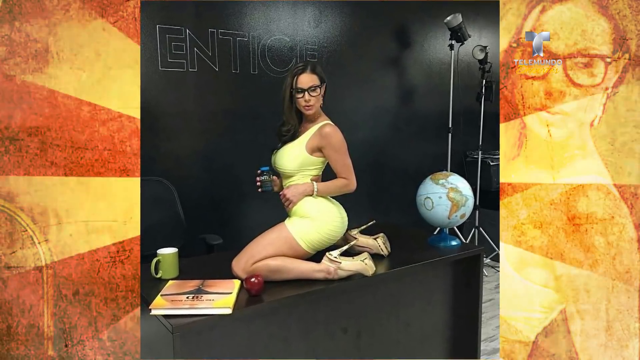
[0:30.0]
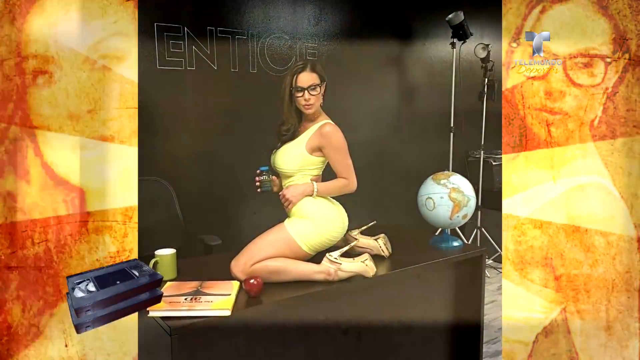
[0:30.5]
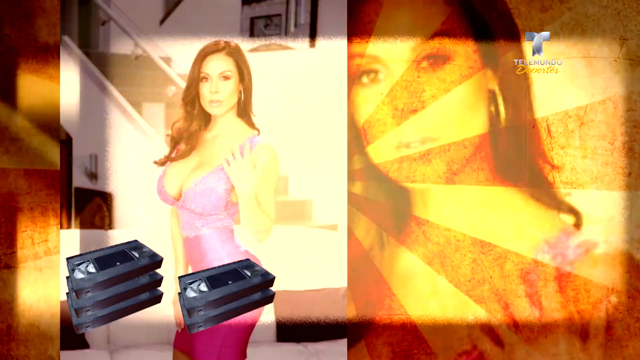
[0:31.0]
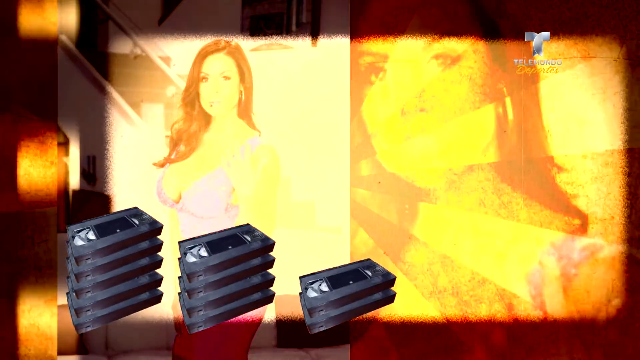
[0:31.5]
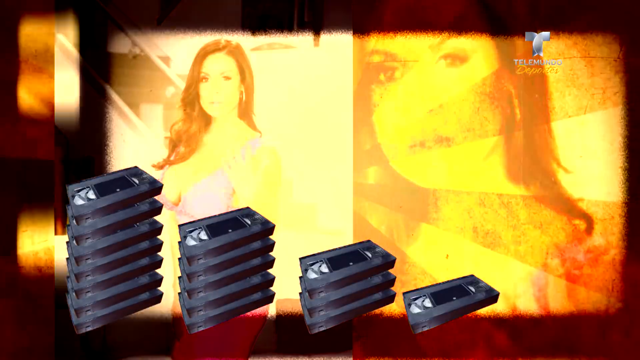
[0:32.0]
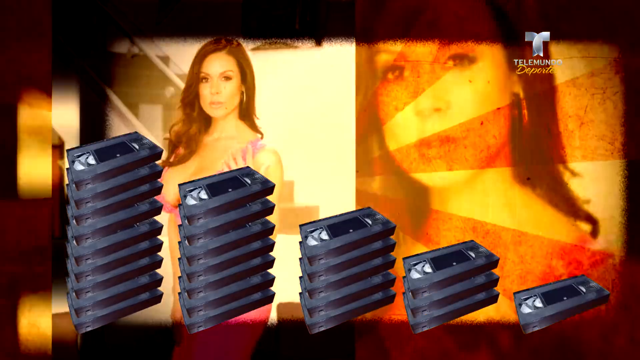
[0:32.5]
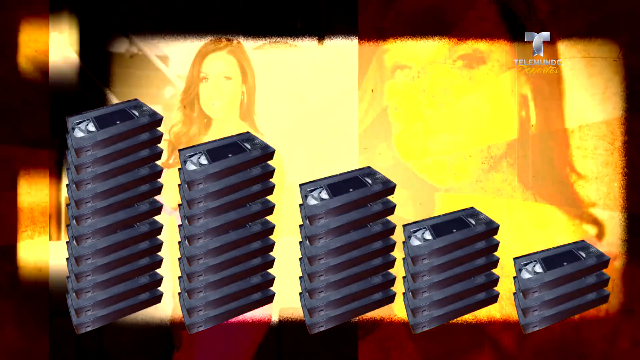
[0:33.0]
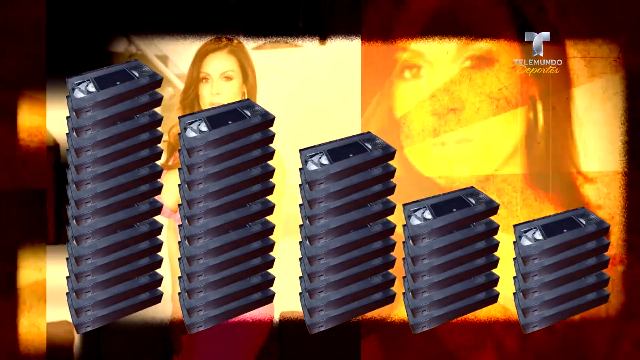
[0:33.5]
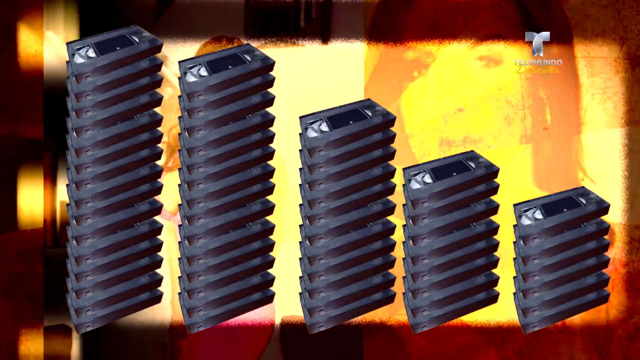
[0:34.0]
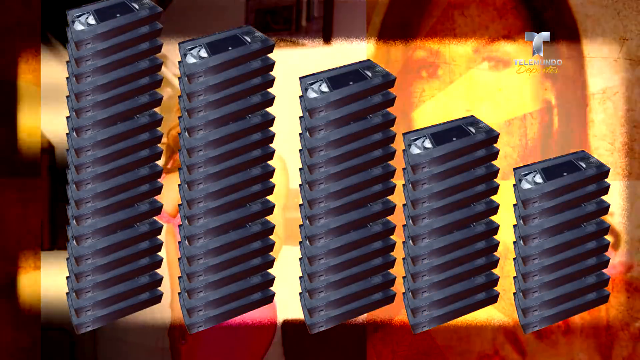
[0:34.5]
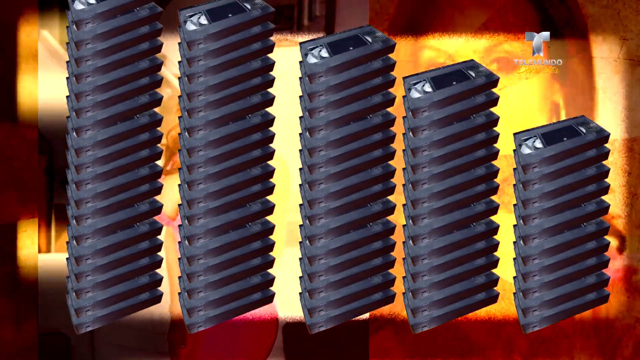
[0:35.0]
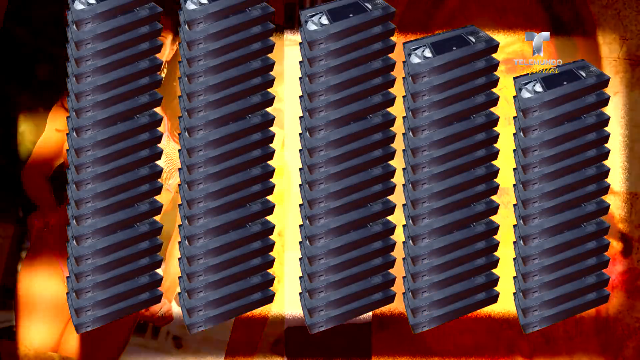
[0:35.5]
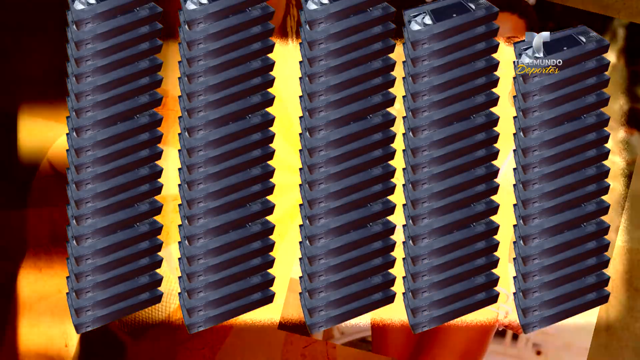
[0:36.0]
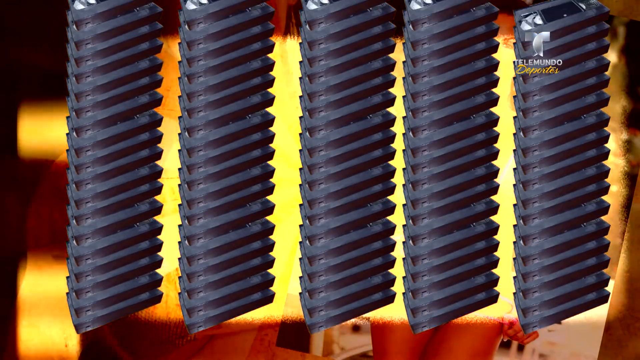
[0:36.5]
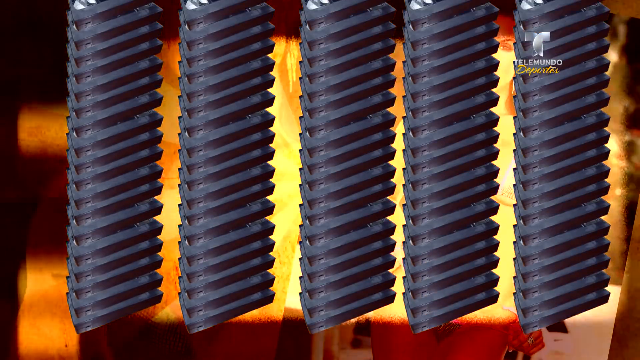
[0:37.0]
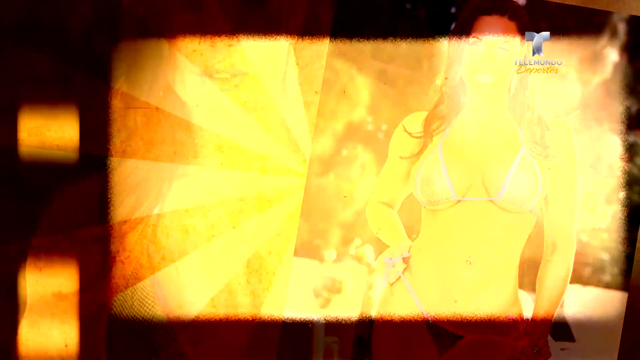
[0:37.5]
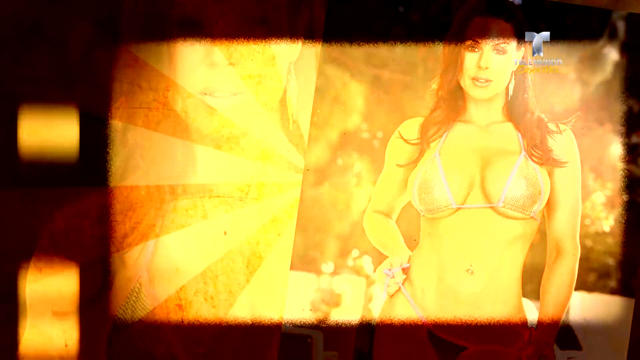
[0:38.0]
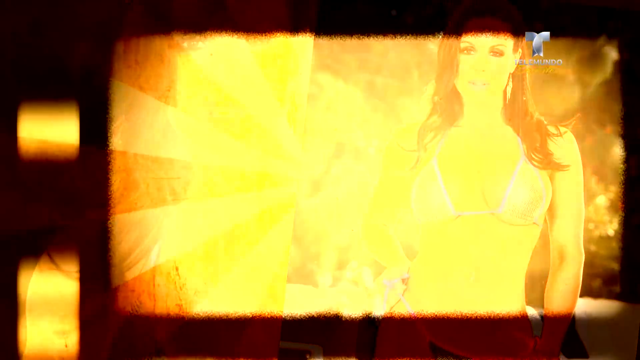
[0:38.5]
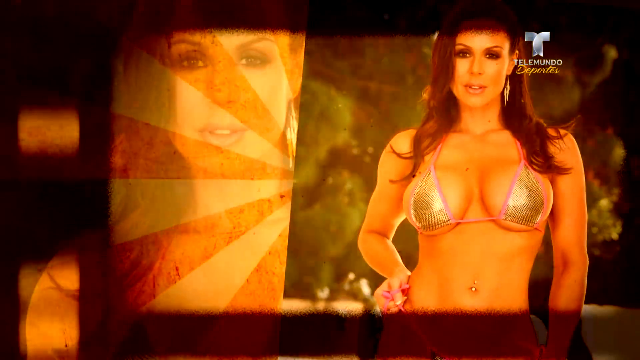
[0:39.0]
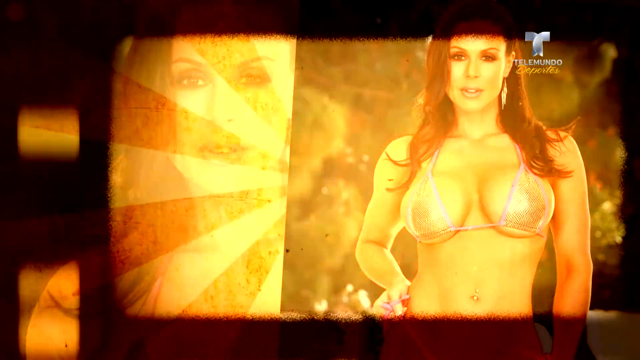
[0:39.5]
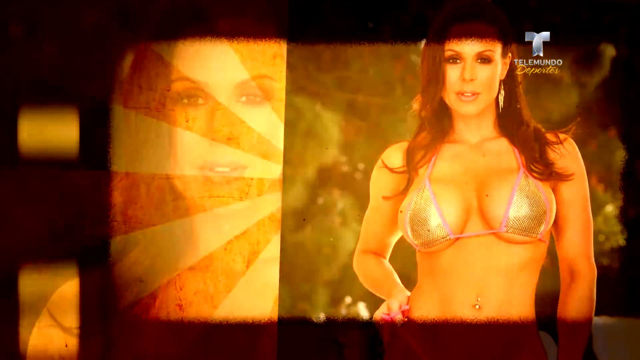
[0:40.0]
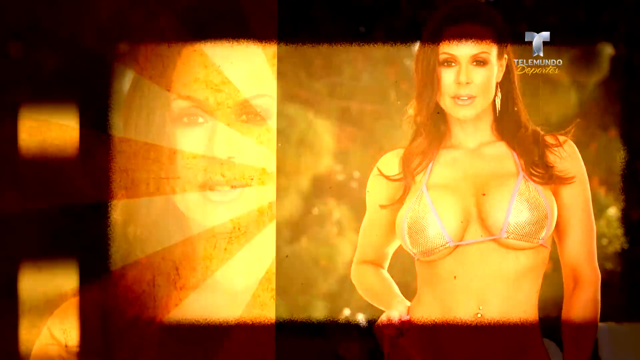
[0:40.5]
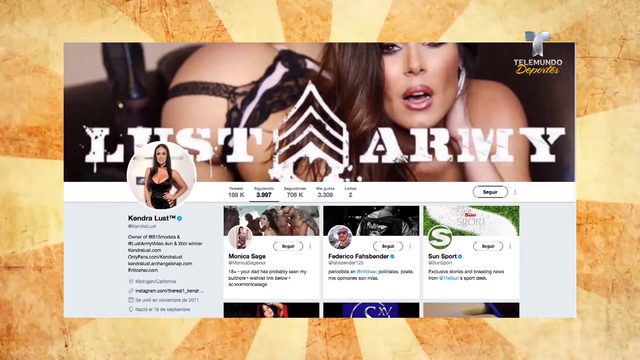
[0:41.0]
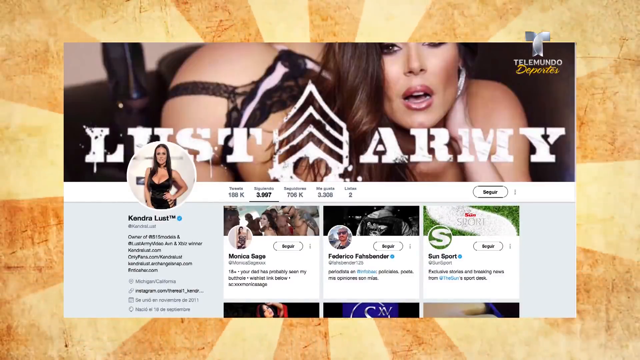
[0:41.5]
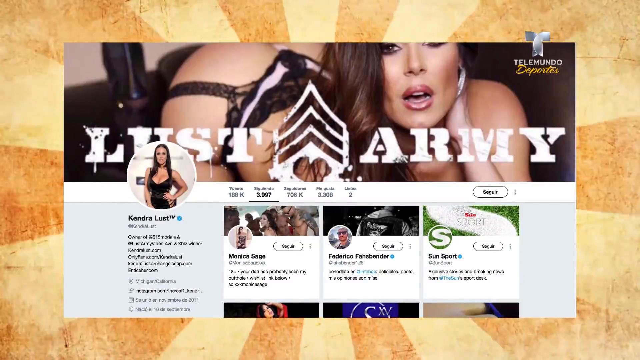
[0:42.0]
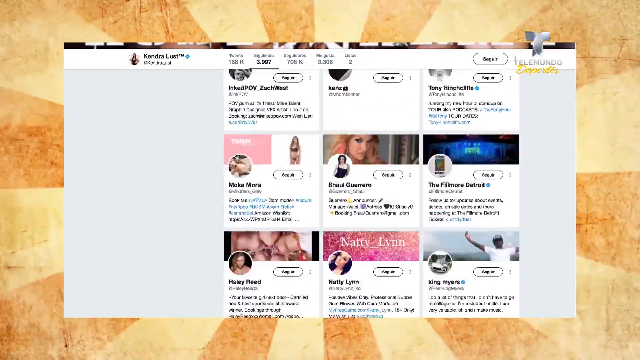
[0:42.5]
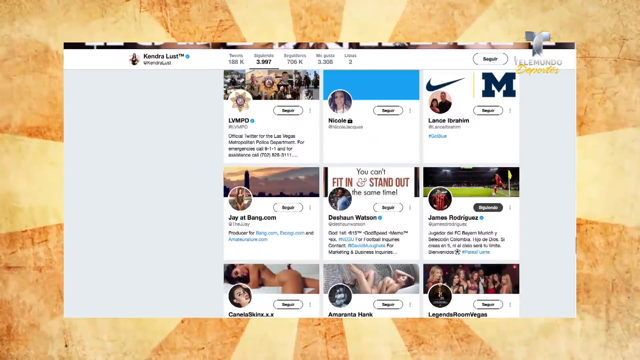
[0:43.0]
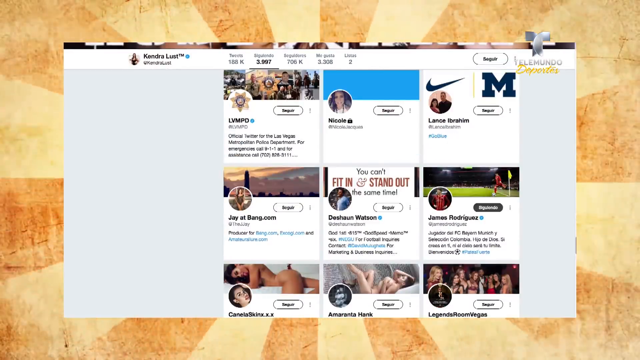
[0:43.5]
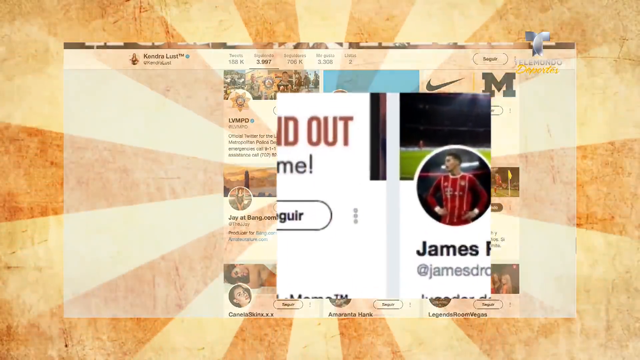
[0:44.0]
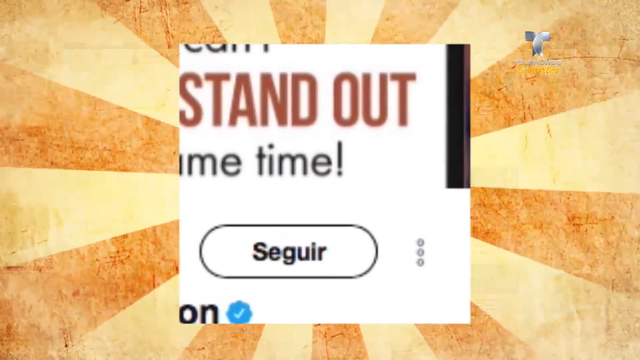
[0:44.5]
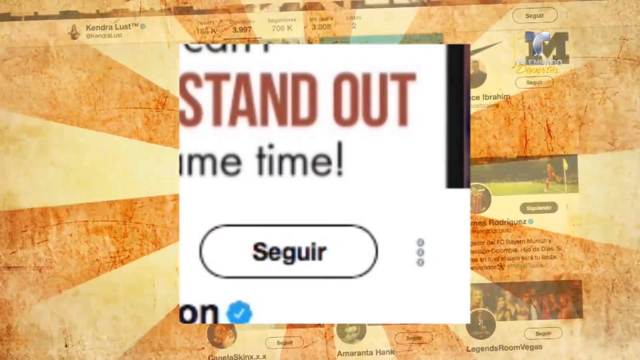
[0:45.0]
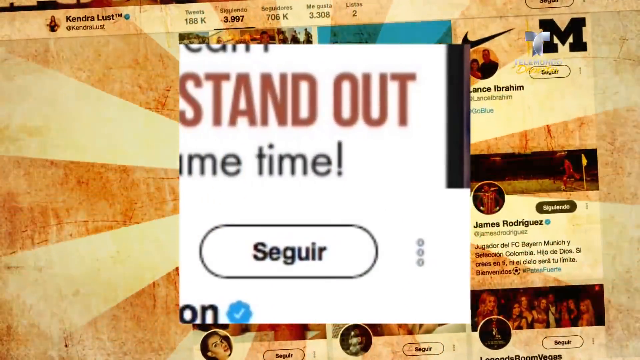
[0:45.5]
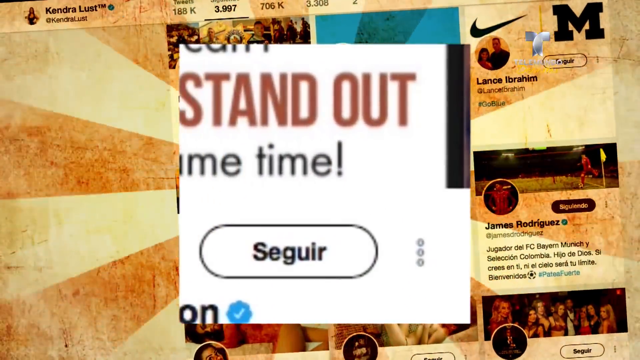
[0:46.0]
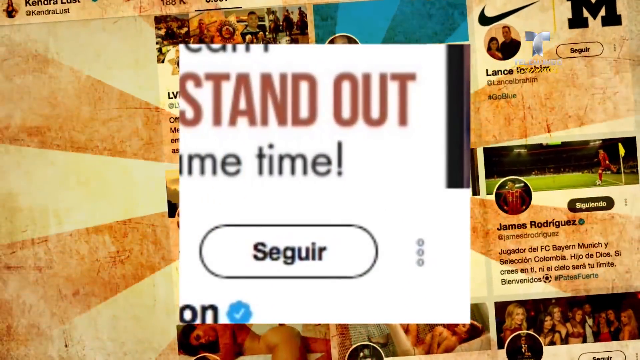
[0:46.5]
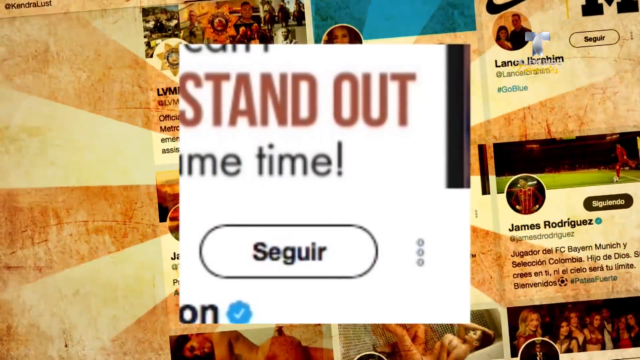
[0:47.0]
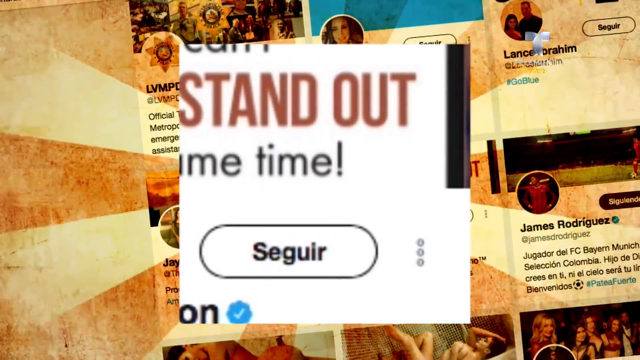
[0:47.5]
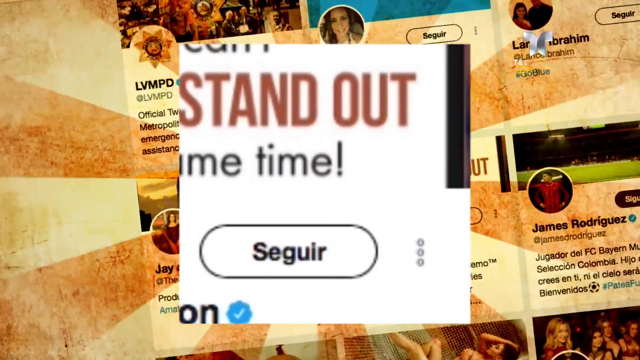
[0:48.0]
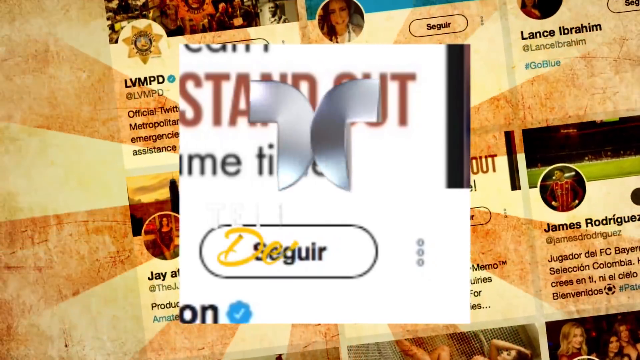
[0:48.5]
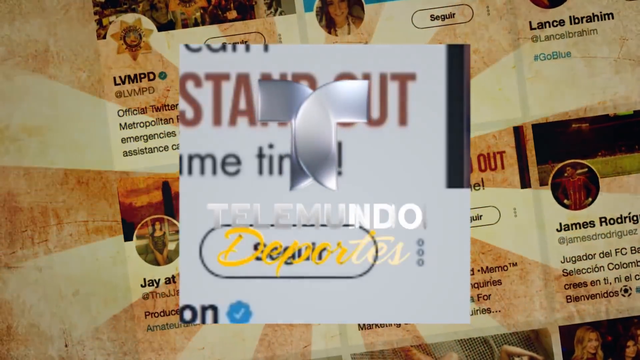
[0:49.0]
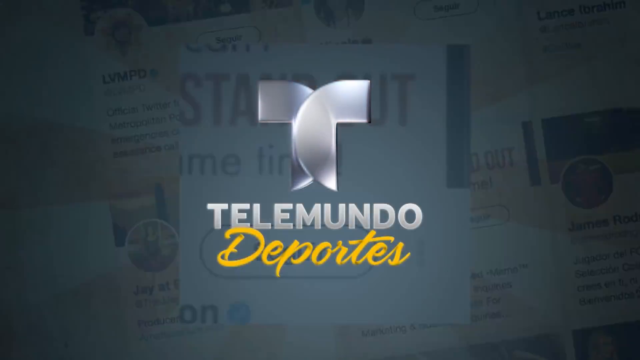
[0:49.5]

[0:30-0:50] More pictures of her are shown. Then an animation shows VHS tapes in five columns being stacked upon each other. The video goes back to scrolling quickly through the profiles and scrolls to one of them, then closes in on the word "Seguir", apparently Spanish for follow, seemingly showing that he has followed this model. The video then closes to "Telemundo Deportes".